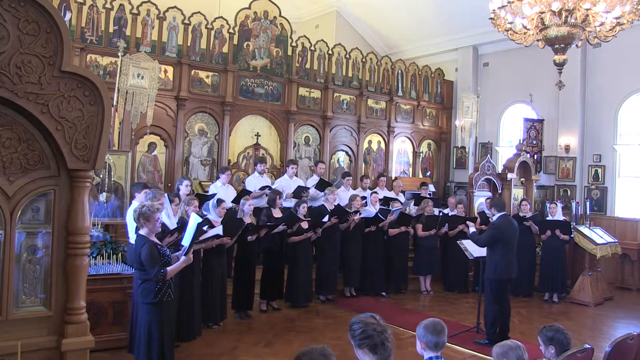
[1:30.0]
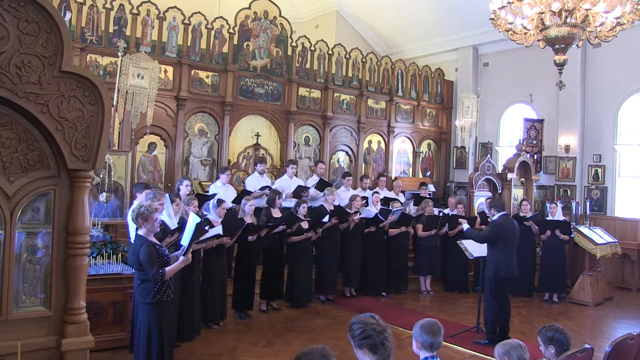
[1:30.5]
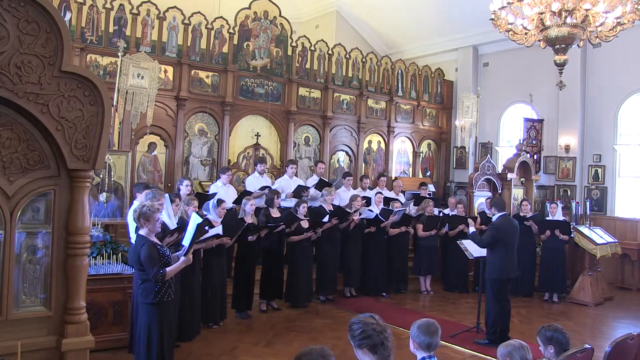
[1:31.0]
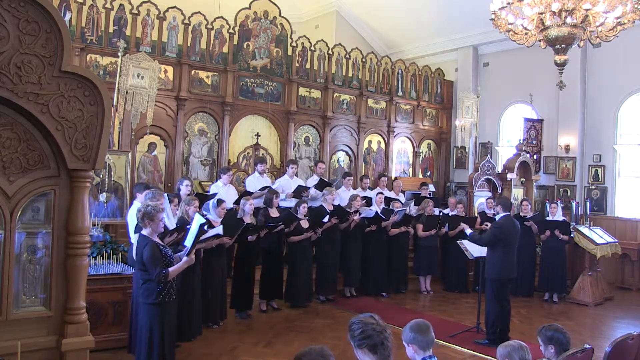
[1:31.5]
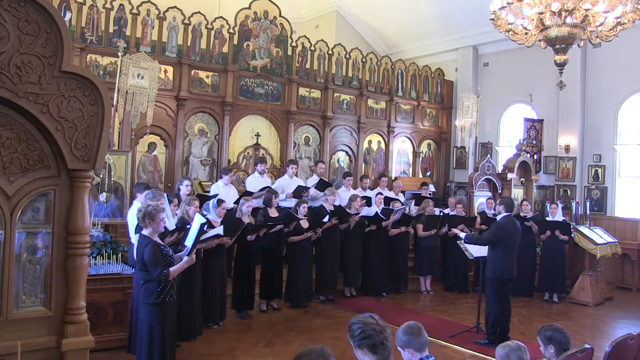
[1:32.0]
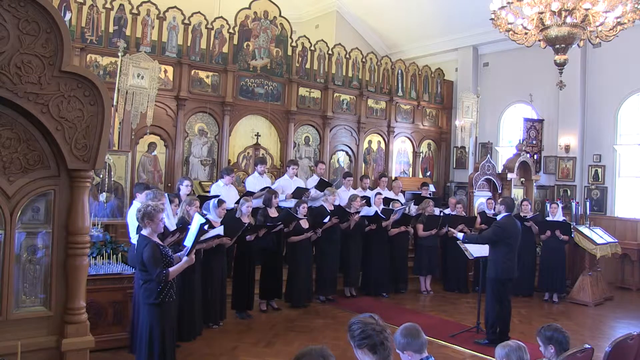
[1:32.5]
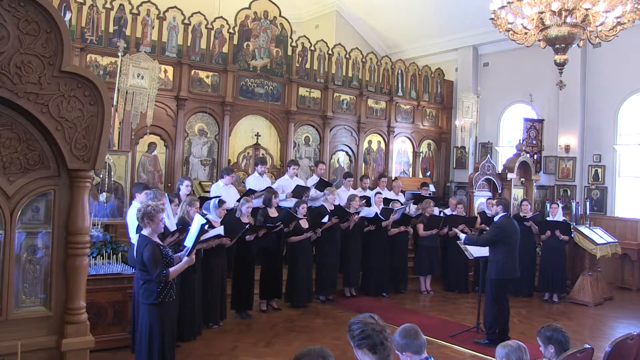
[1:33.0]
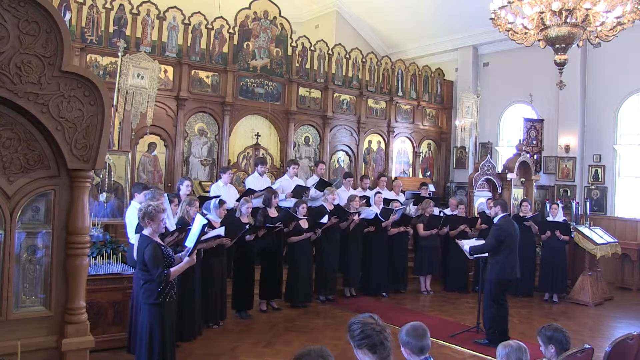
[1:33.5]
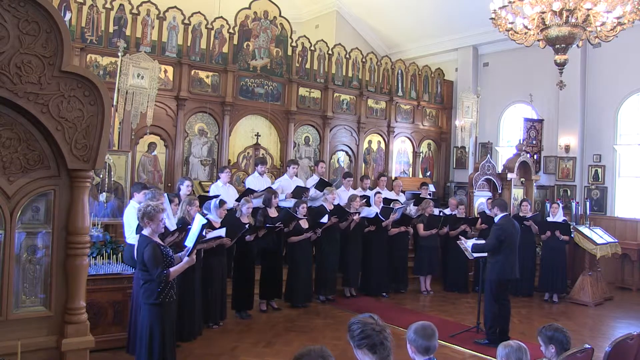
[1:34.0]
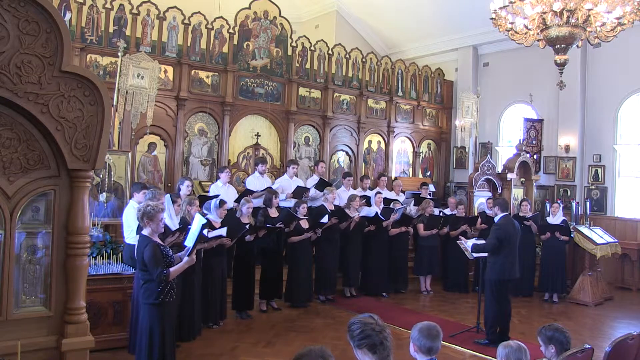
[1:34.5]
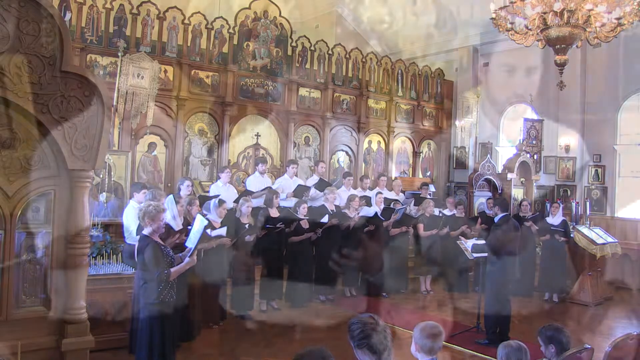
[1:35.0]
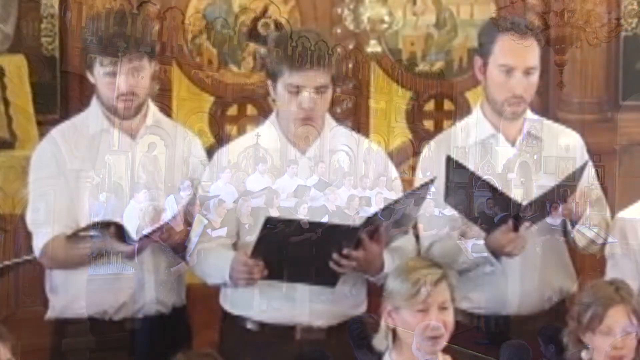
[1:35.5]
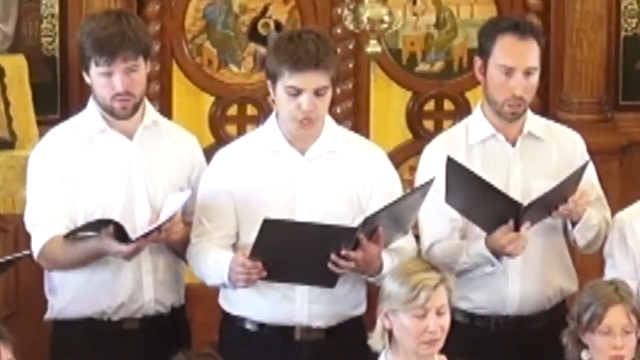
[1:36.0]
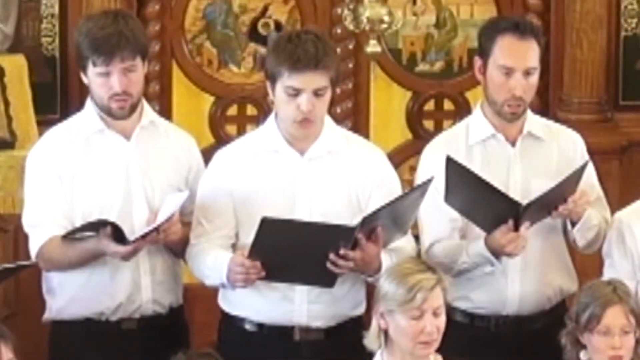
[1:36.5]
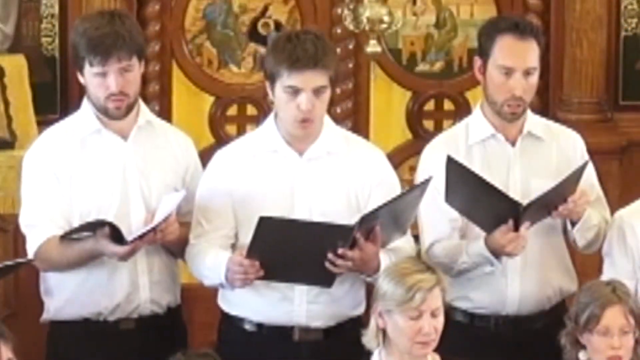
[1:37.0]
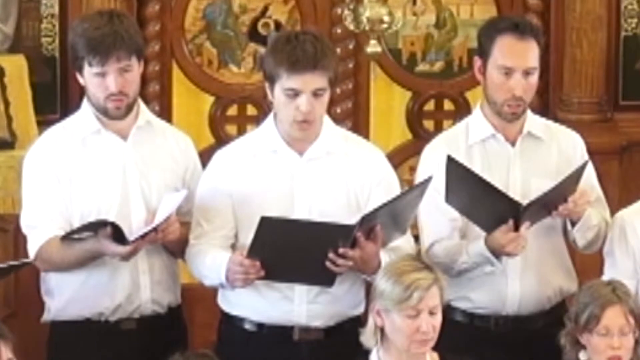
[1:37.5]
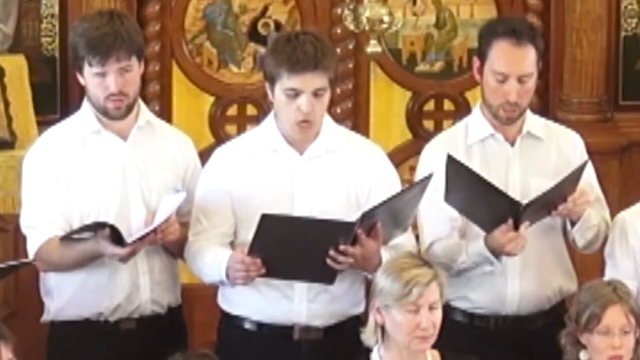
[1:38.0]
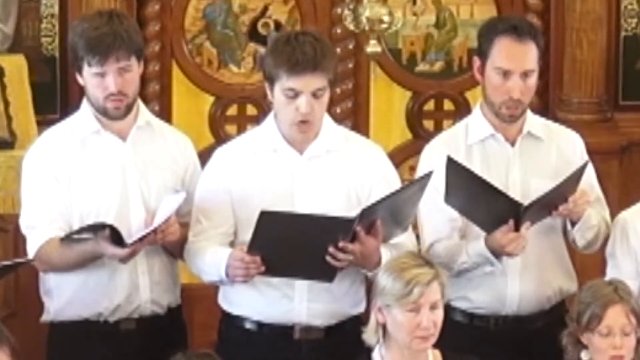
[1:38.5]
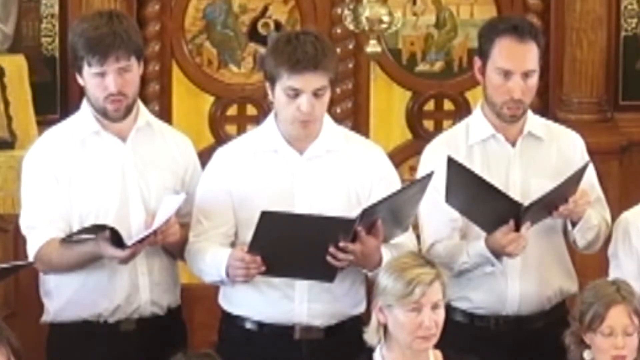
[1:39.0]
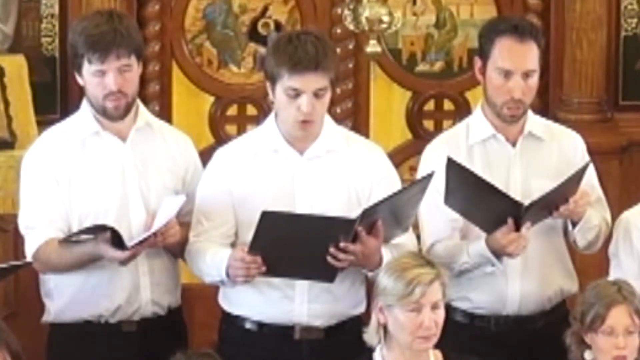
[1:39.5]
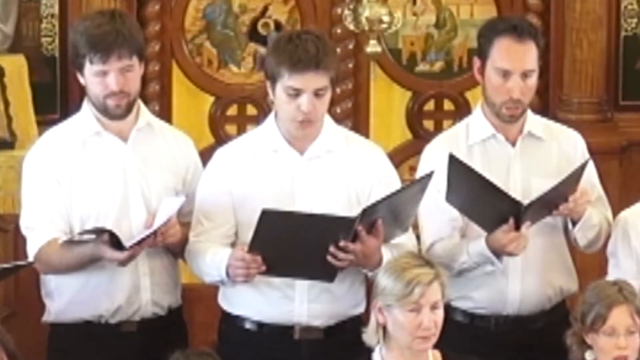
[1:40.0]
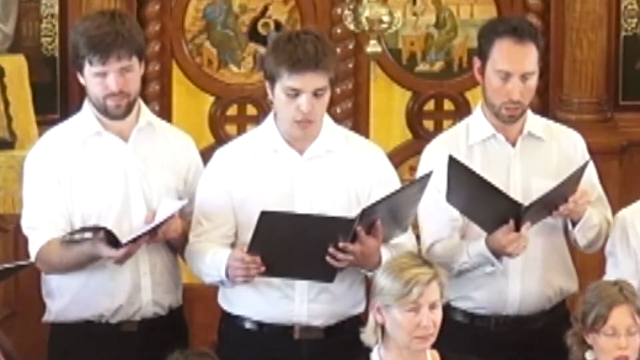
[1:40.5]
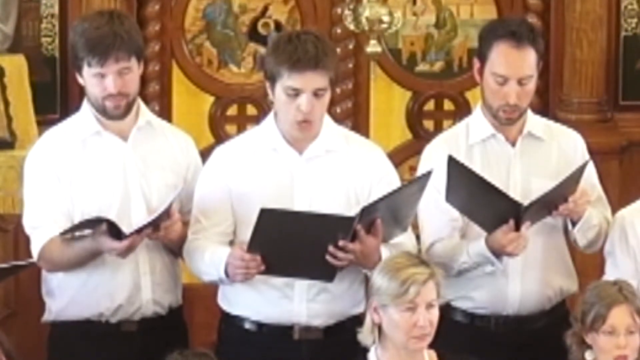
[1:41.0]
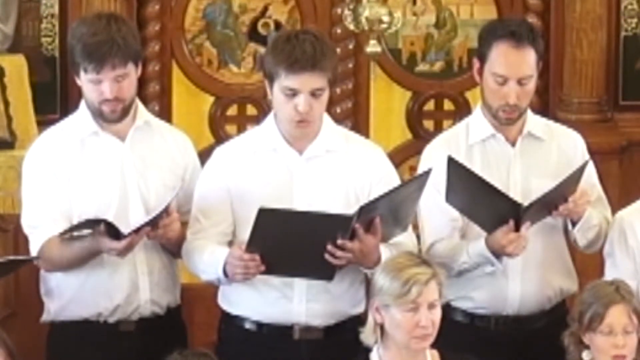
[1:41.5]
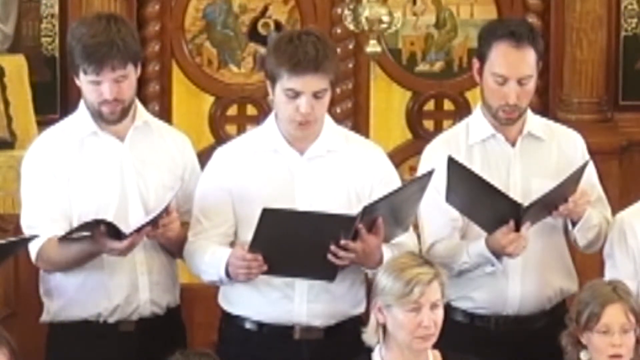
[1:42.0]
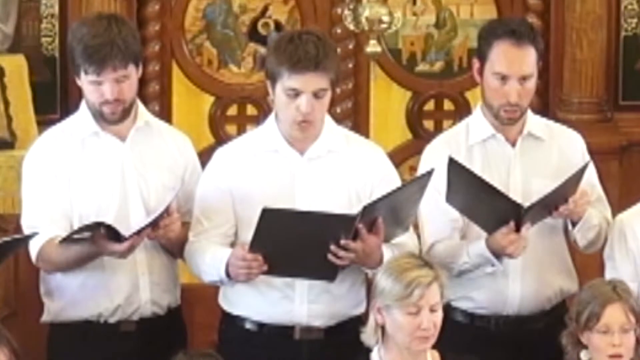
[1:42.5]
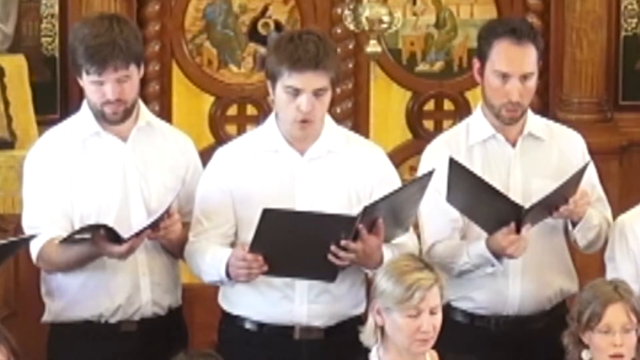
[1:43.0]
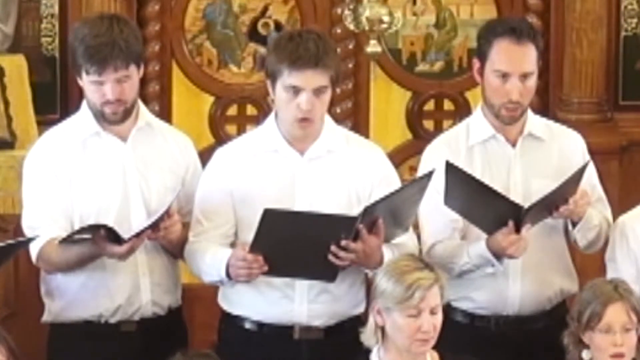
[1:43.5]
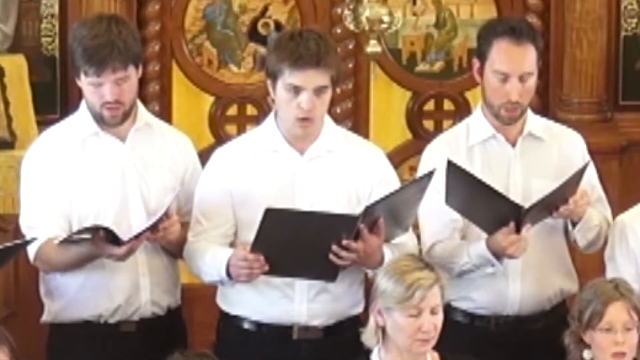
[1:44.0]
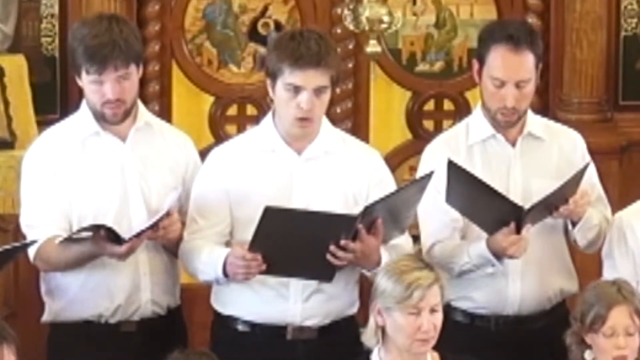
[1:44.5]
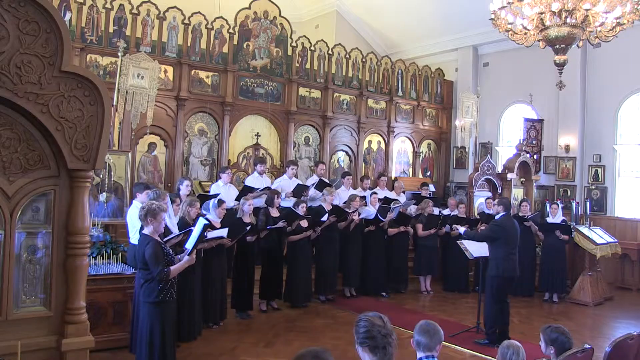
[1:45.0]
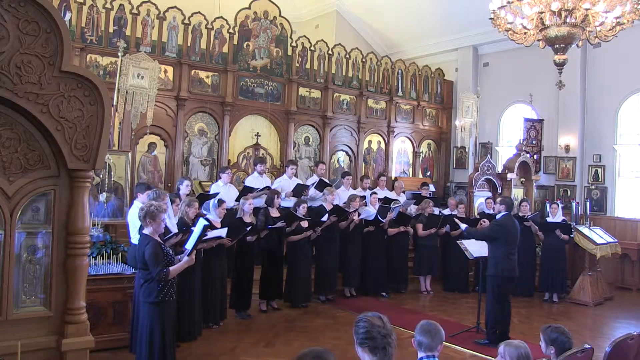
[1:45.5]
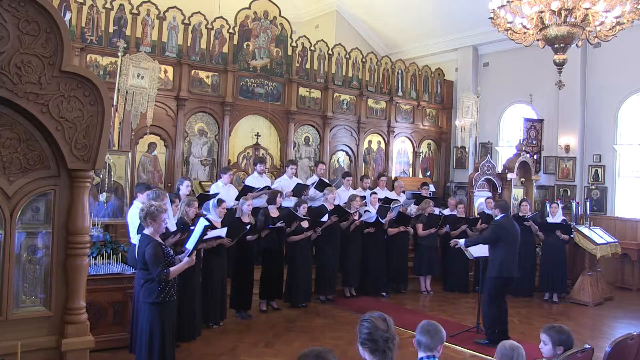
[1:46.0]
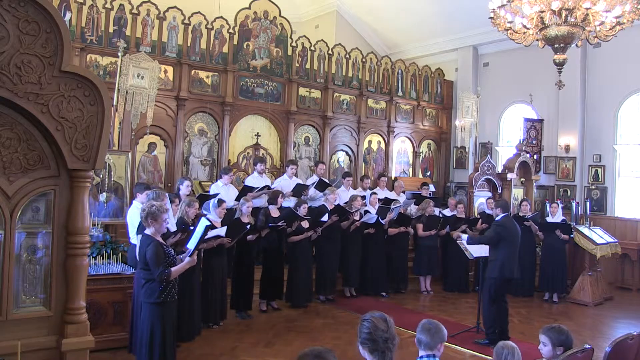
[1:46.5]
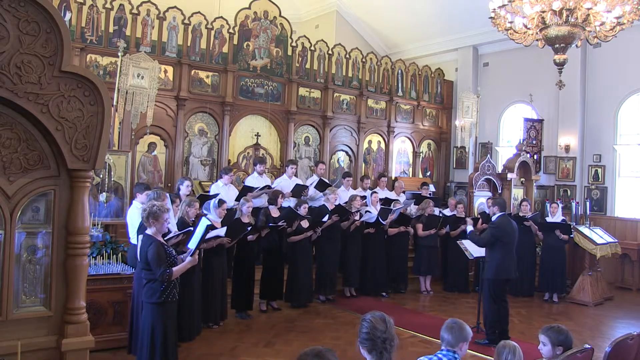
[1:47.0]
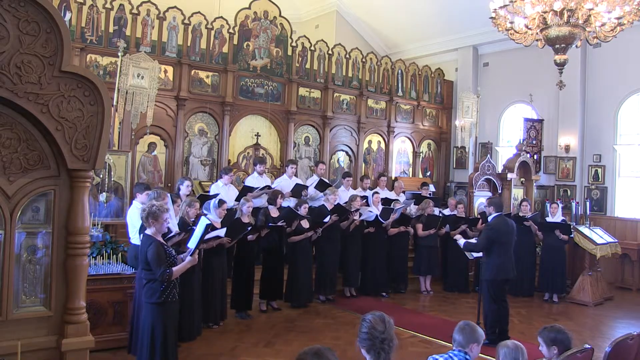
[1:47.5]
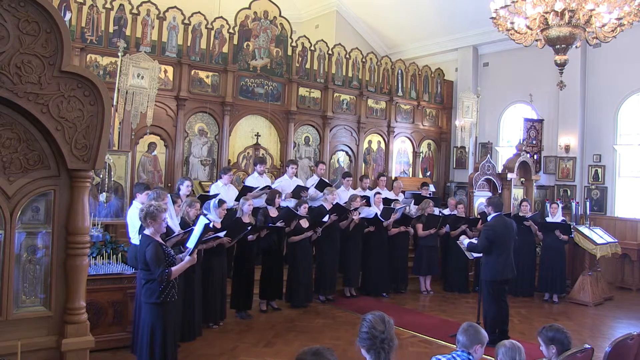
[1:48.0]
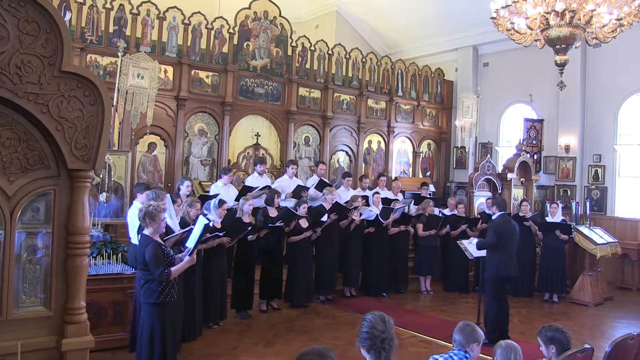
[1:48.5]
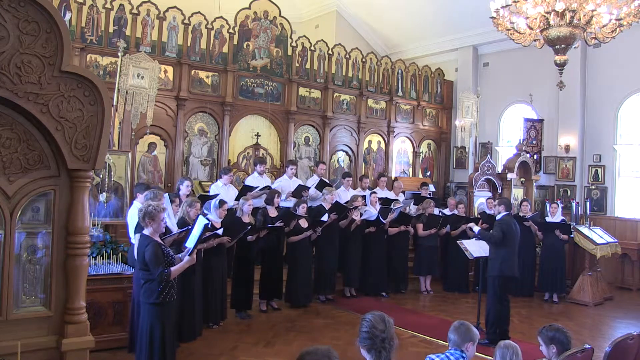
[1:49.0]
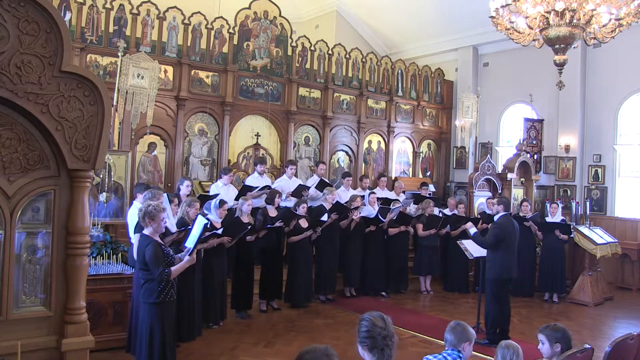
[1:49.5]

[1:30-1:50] The choir continues to sing, and the camera focuses on the three men, who stand side by side with their black books or black pamphlets open in front of them. The men all wear white shirts and black pants. The conductor on the right side continues using hand gestures, and in the bottom right corner is the crowd of people watching the performance. The choir stands in front of big wooden murals that are very large and cover the whole back area. The women, in the first row, wear all black dresses, and the men, in the back row, wear long-sleeved white collared shirts that are buttoned up.